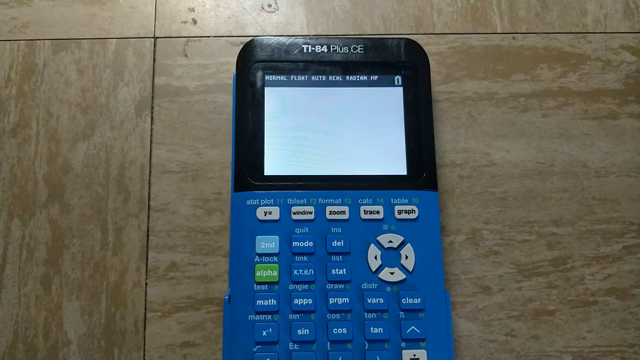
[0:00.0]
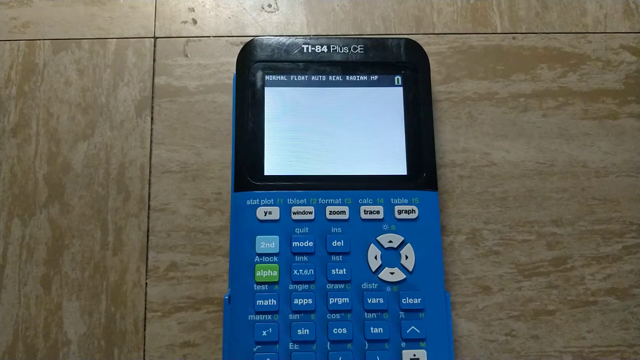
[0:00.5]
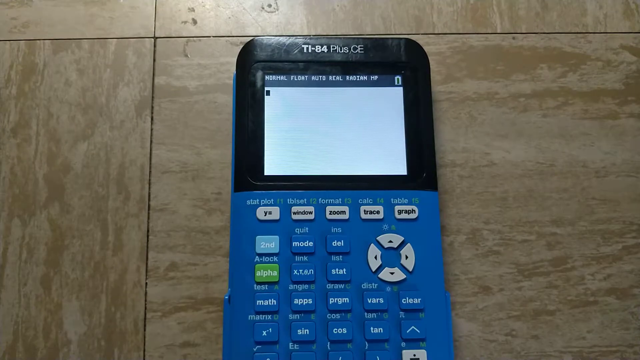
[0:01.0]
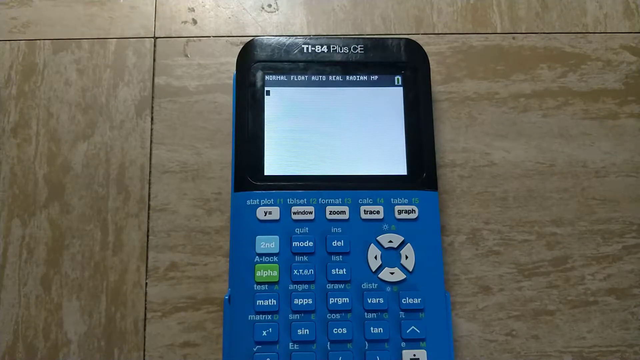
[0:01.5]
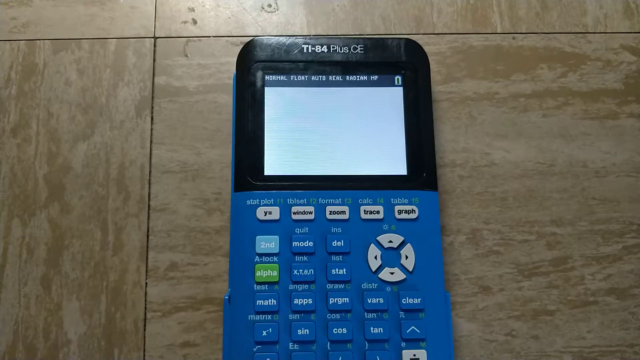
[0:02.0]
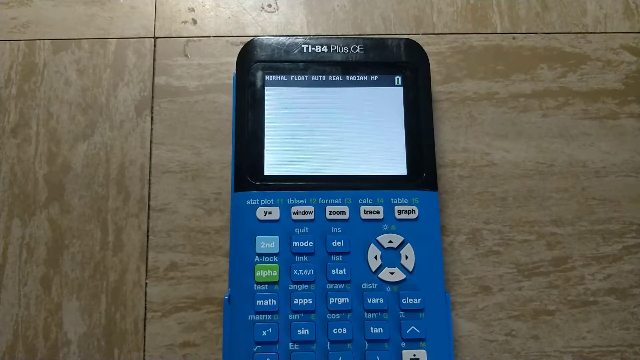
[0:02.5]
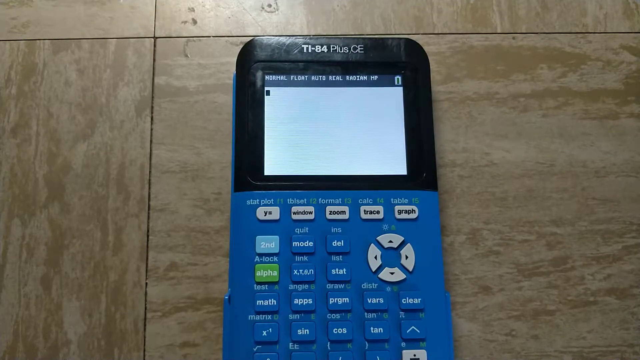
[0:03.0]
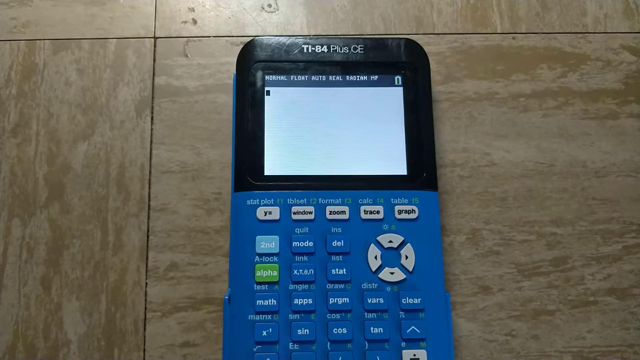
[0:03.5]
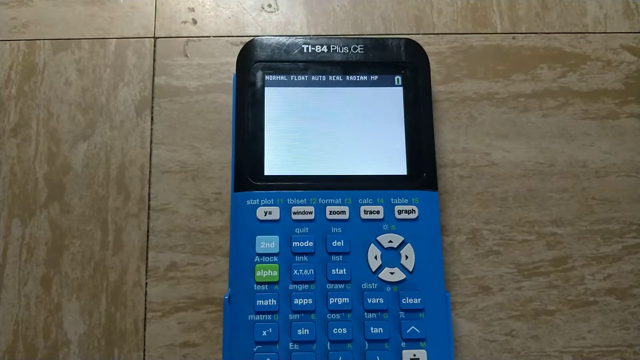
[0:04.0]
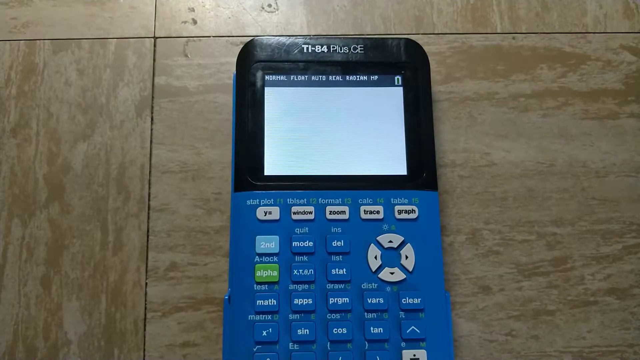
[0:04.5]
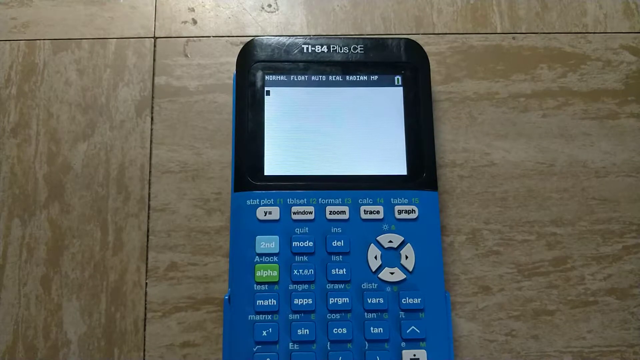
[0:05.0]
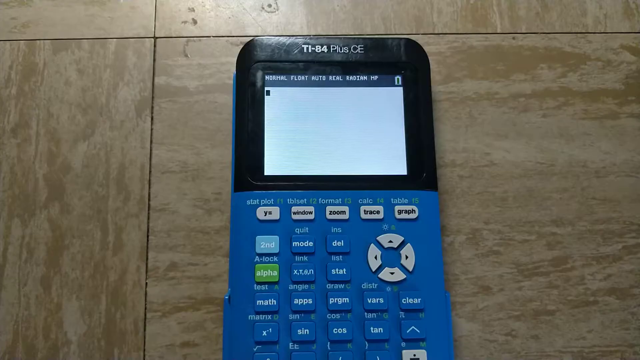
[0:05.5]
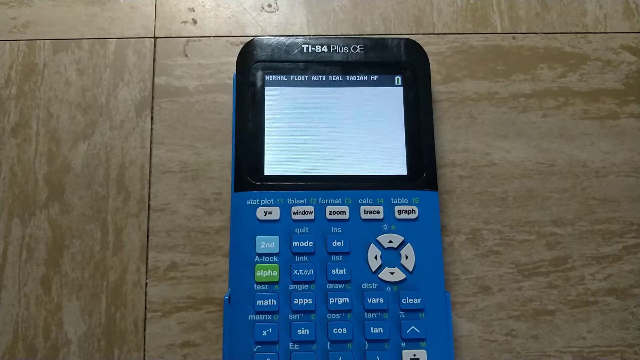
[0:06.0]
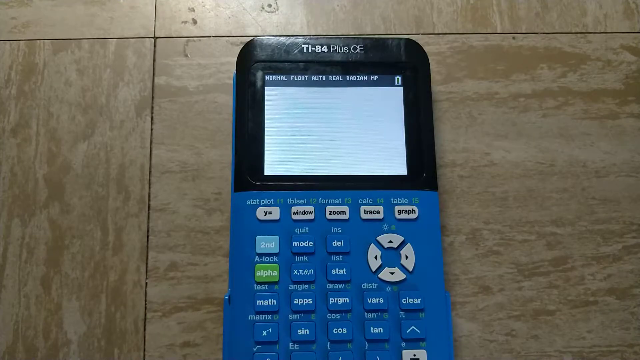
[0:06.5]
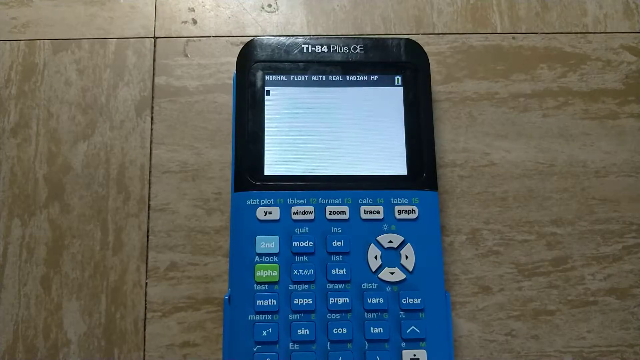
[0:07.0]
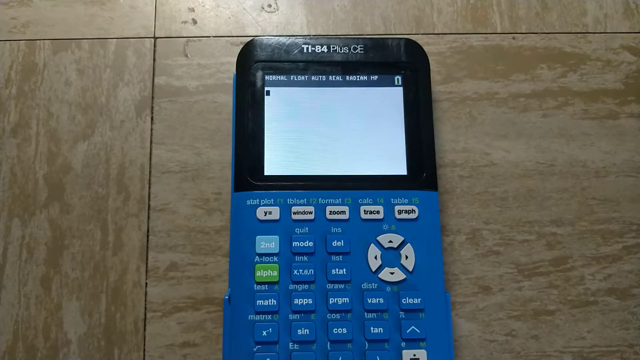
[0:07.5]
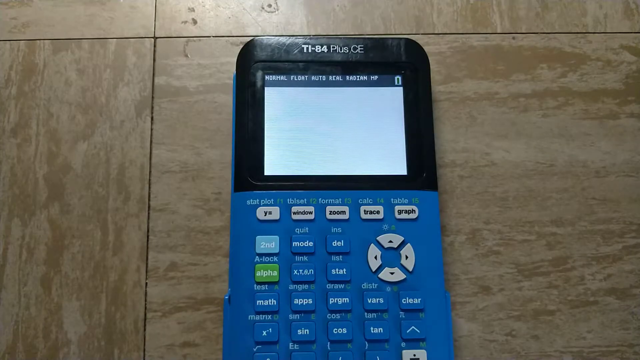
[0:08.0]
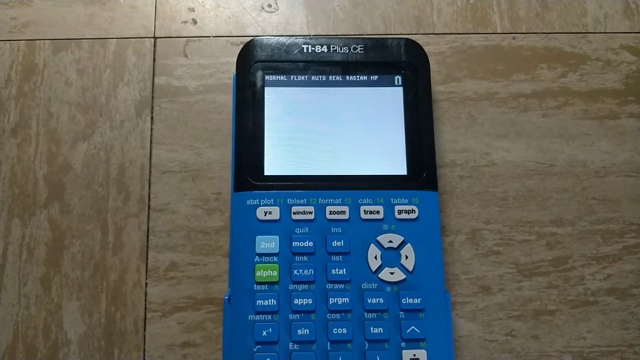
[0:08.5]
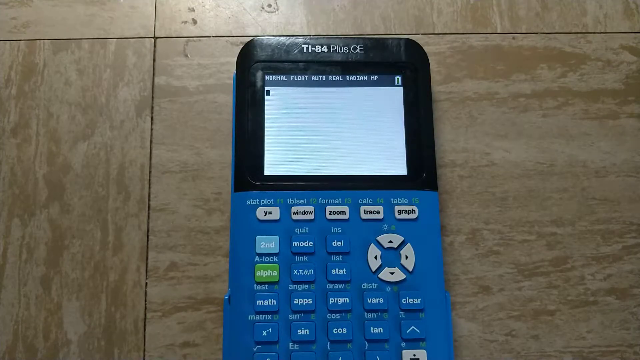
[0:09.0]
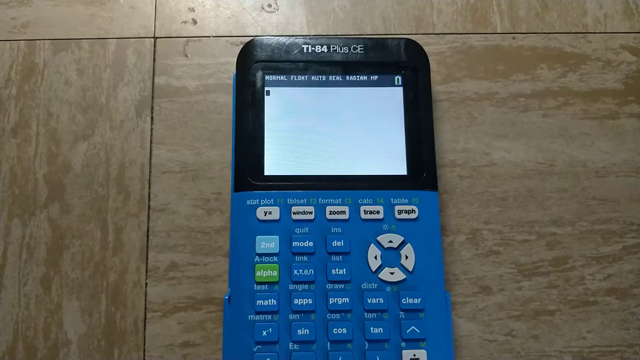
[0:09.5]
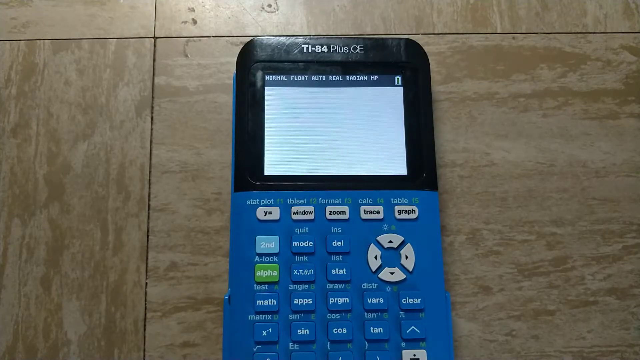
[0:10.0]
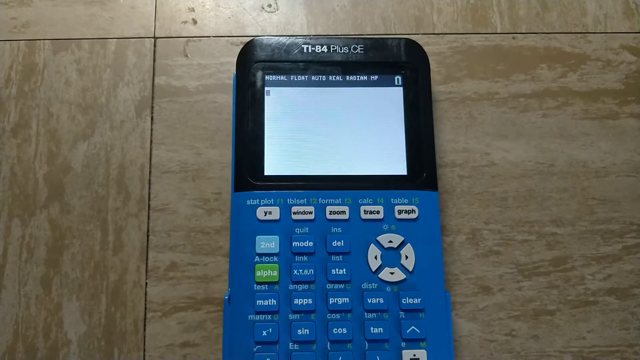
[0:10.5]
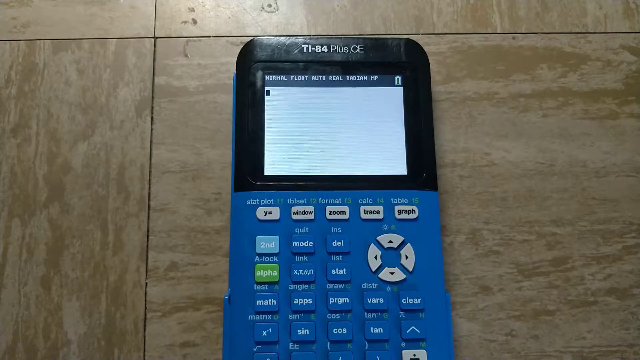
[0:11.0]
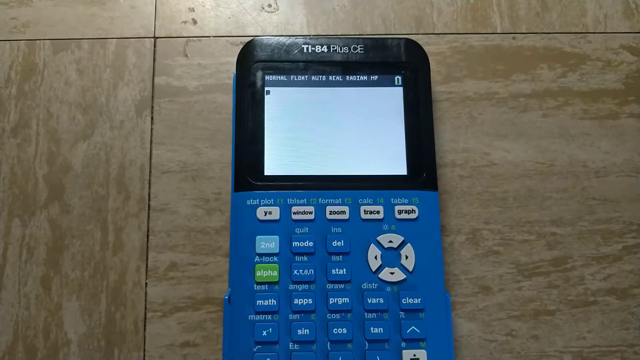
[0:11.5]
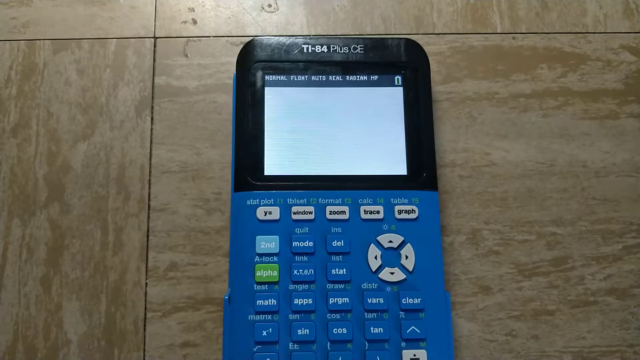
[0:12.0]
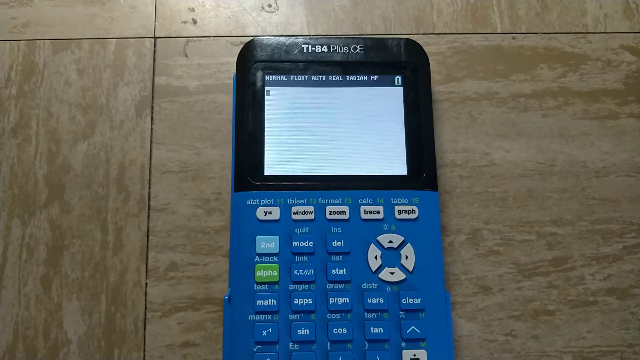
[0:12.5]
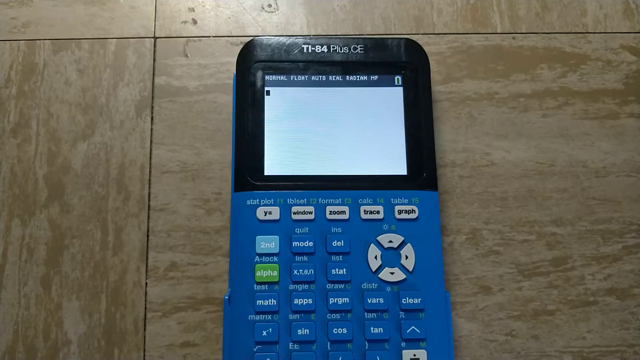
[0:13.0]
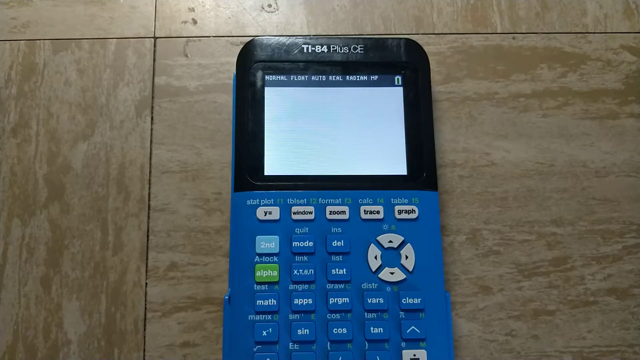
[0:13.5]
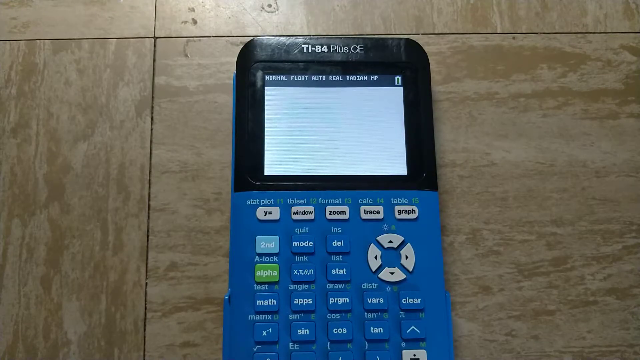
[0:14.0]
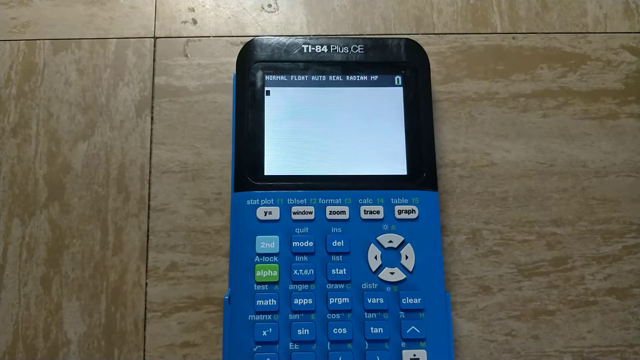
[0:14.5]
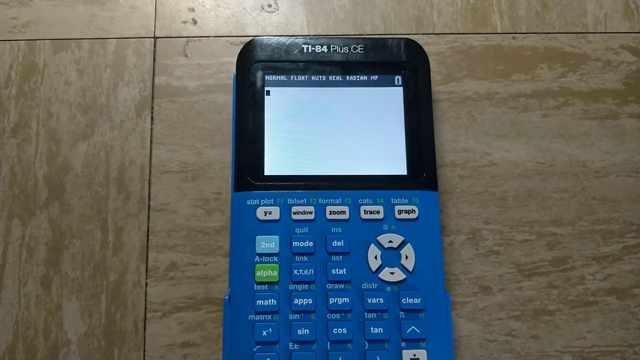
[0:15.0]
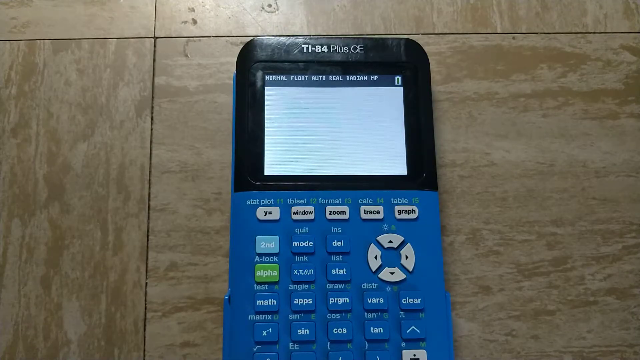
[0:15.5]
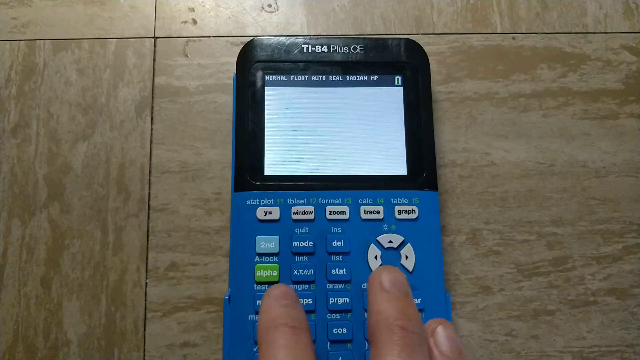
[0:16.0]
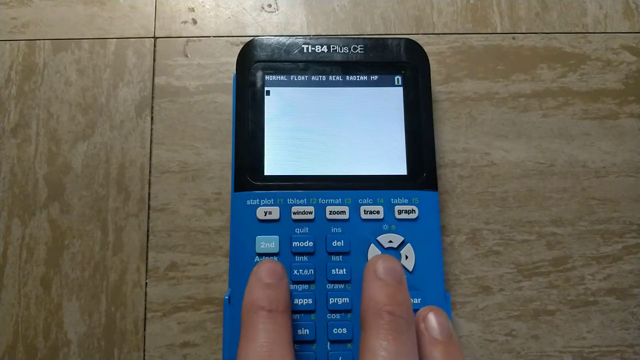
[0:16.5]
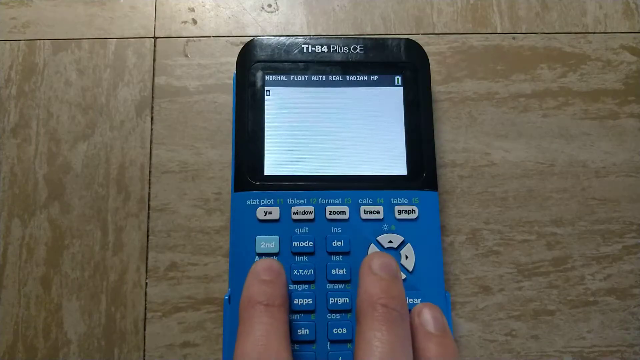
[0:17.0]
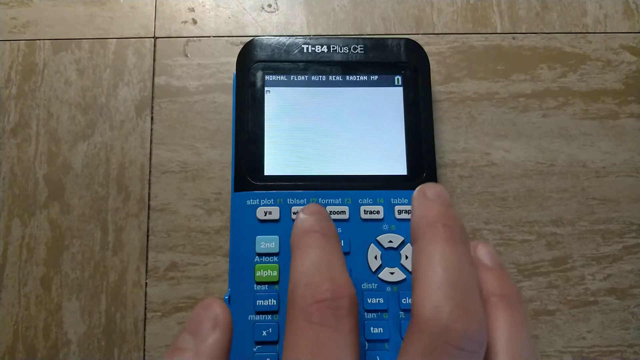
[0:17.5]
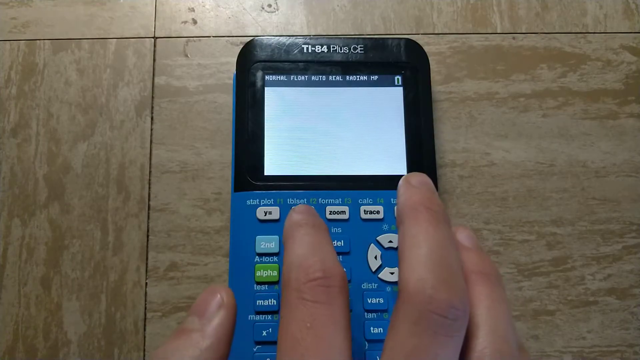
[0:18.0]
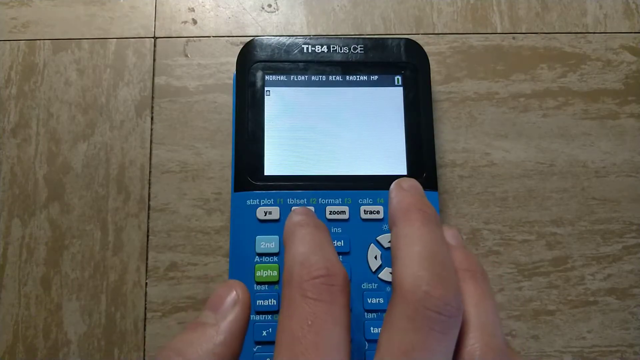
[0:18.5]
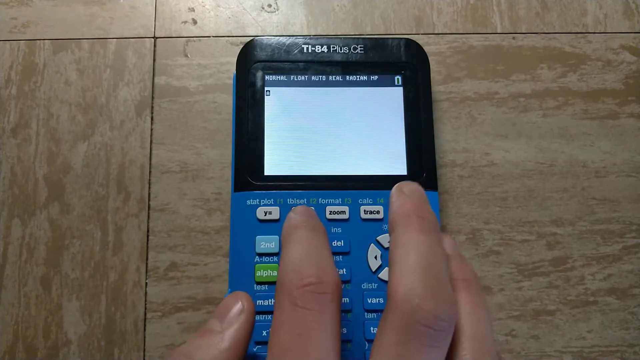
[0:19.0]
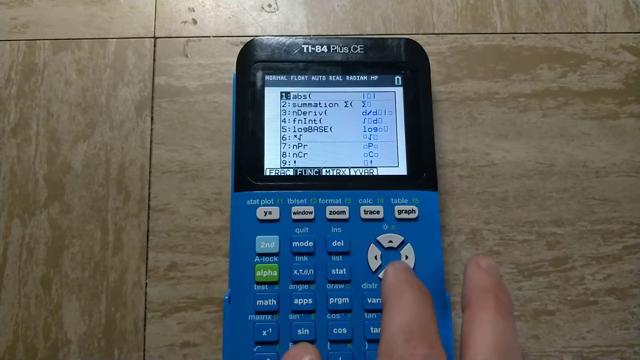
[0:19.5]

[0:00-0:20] A calculator appears to be placed on a floor; it could be a table, but it seems to be a floor, and there are floor tiles in the background. The calculator is blue and black with a lot of symbols, and it looks unusual for a calculator. Text including numbers on it reads "IT/84 plus CE". There is a pattern of buttons with letters, and names are written next to them; words or numbers are also written on the buttons themselves. There is a navigation pad for scrolling up, down and side to side. A person's hand uses the calculator, pressing a button, and numbers or information appear on the screen, which was blank before.